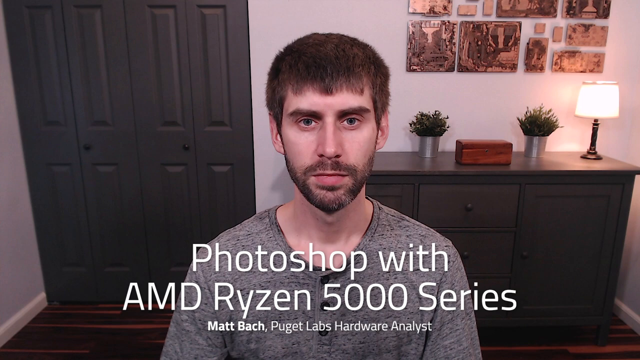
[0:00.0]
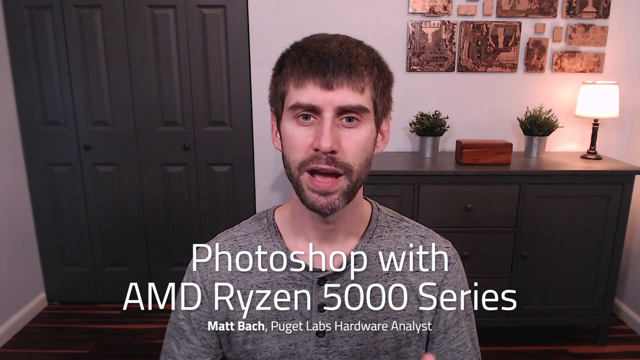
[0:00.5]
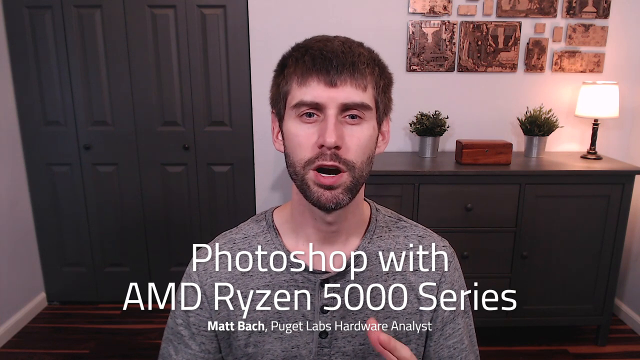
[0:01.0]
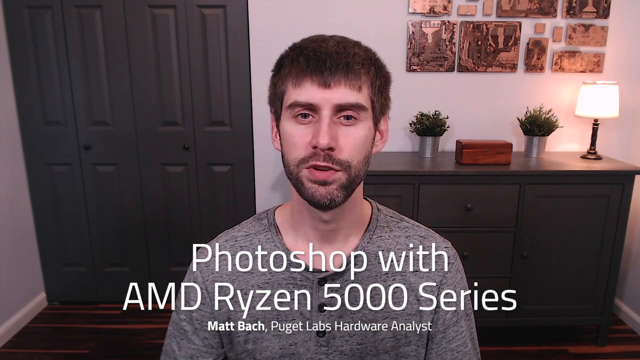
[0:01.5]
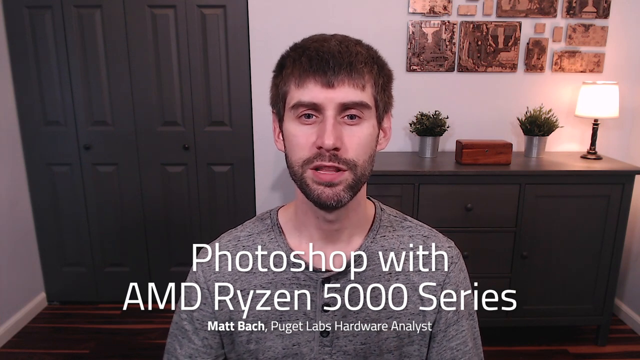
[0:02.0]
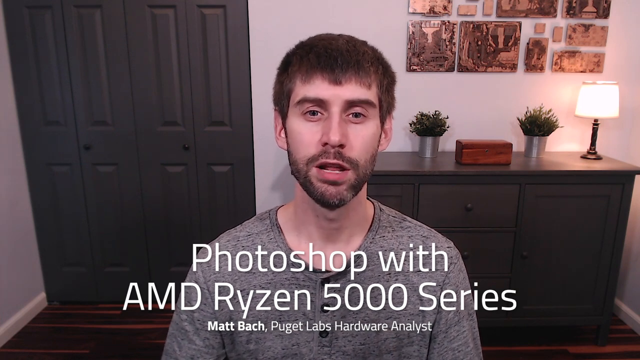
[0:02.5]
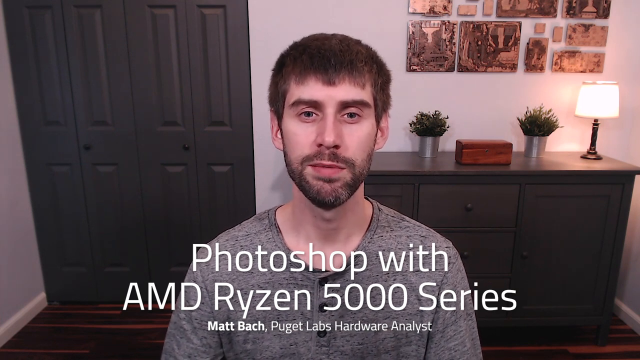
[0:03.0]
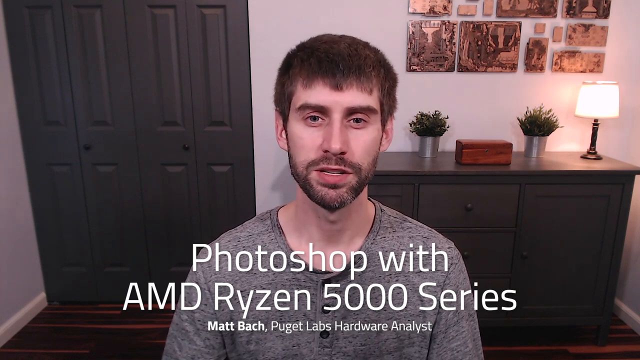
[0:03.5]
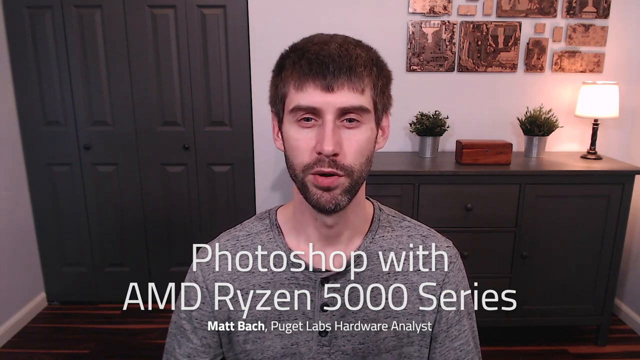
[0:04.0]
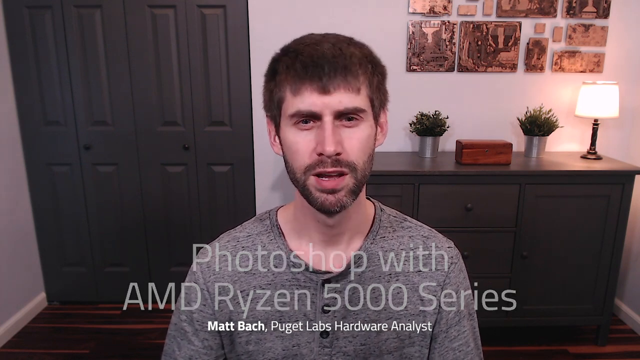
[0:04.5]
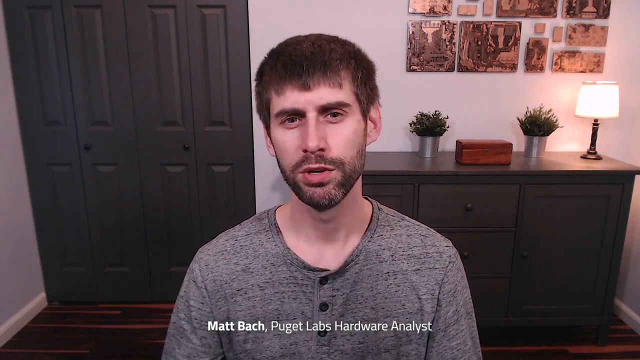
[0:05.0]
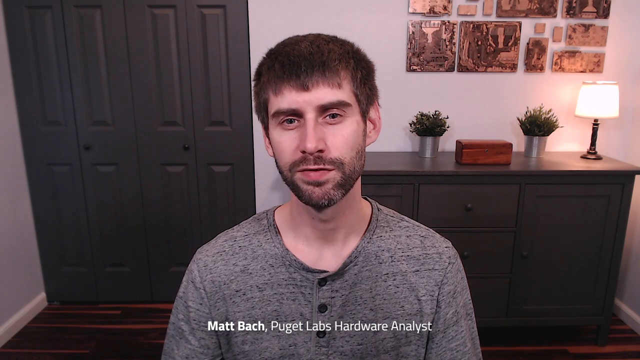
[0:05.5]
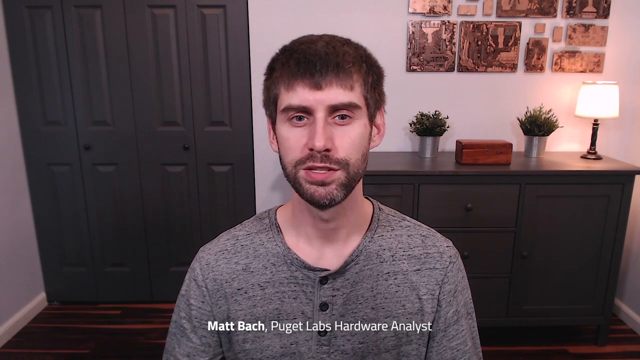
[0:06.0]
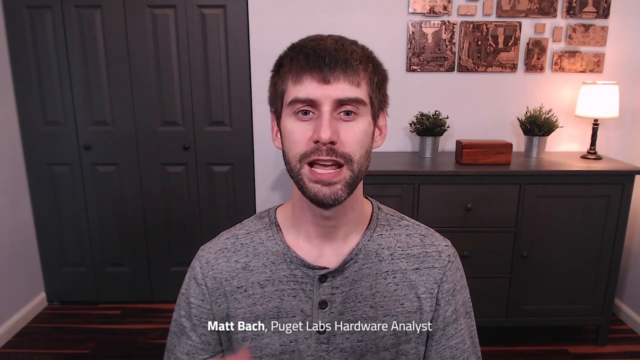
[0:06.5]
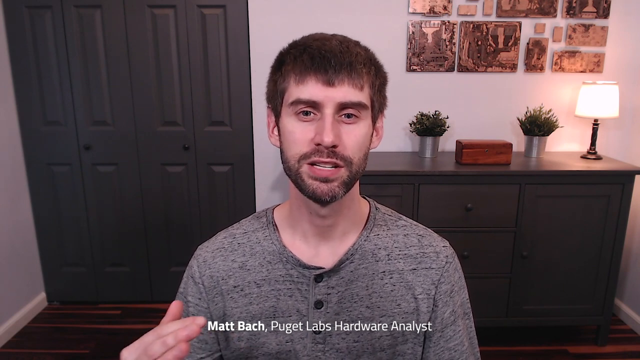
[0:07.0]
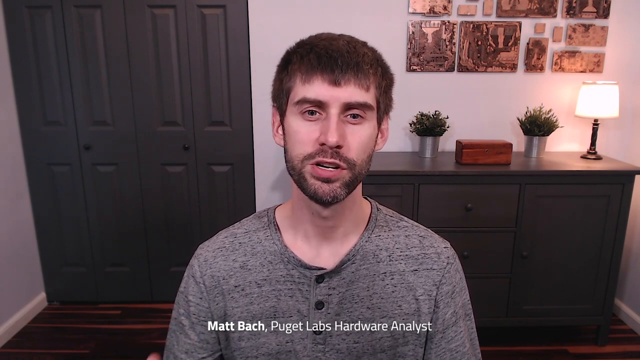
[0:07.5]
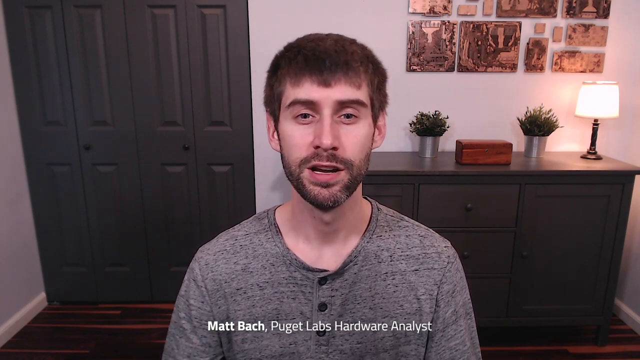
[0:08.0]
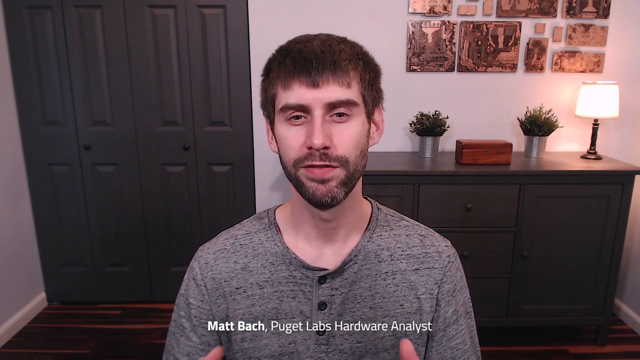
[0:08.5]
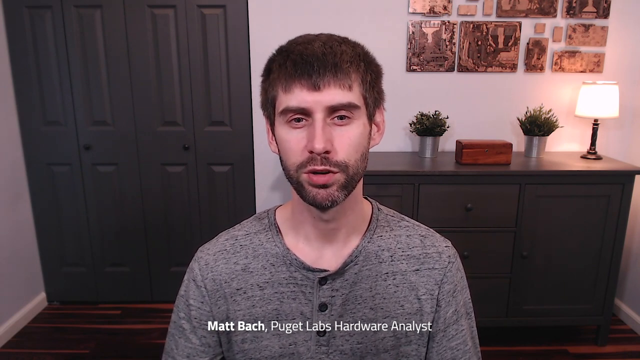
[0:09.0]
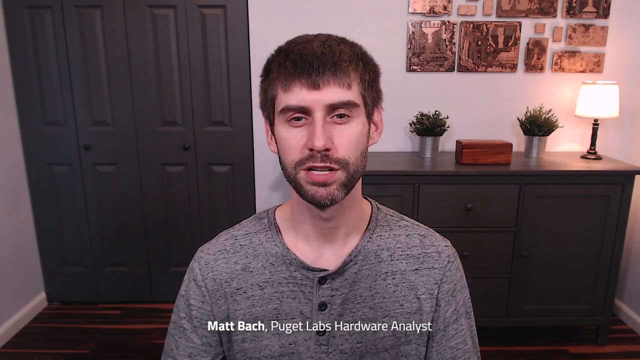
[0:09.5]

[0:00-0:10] A white adult male appears to be sitting at home. He seems very engaged in an activity related to computers or technology, possibly recording a review or tutorial about Photoshop with AMD Ryzen 5000 series processors. He is likely sitting in front of a computer in an organized home, and he seems to be in a good mood. His face is shown closely.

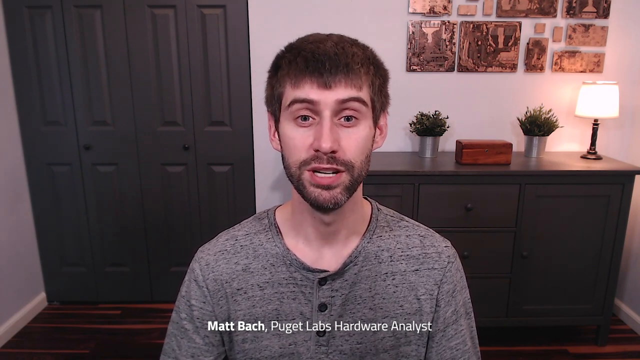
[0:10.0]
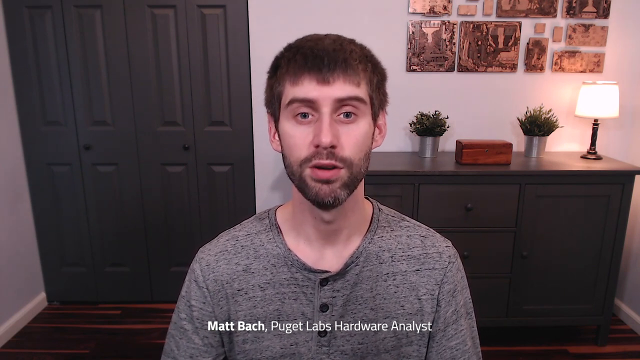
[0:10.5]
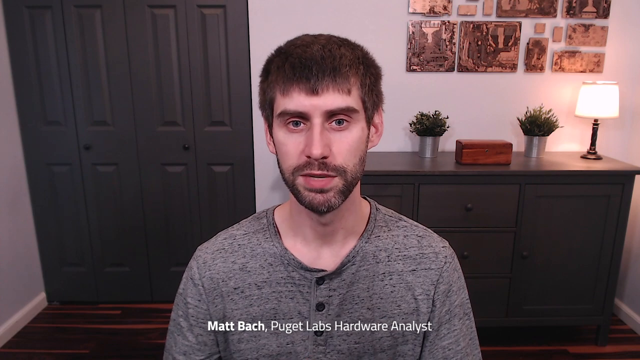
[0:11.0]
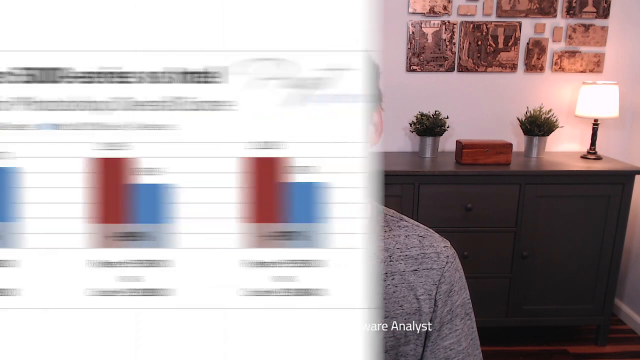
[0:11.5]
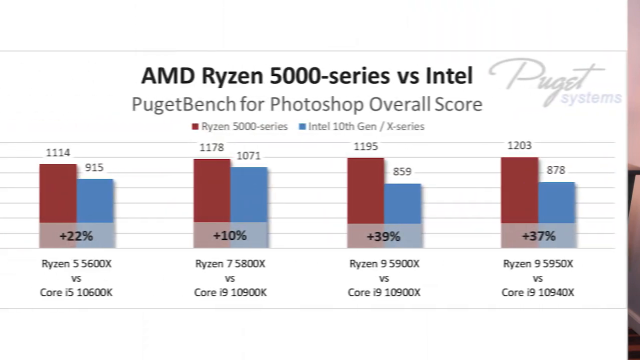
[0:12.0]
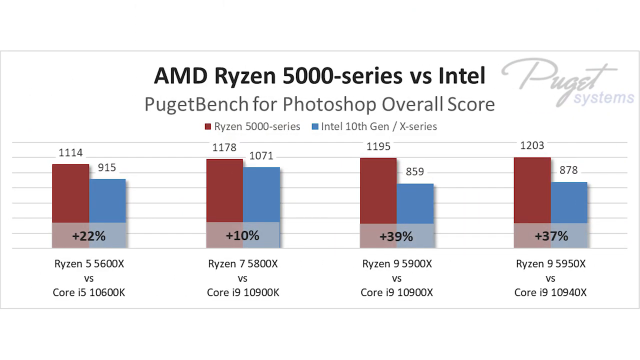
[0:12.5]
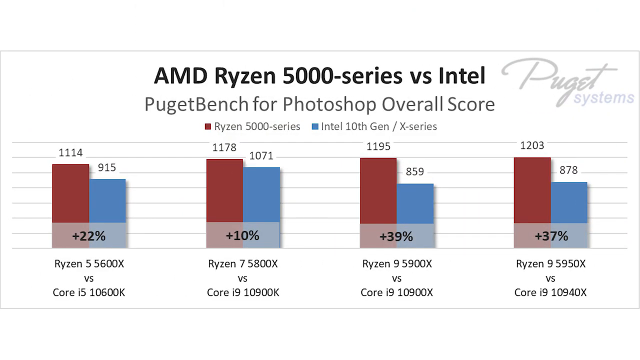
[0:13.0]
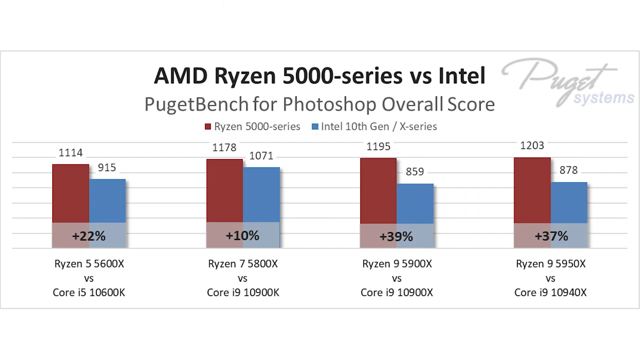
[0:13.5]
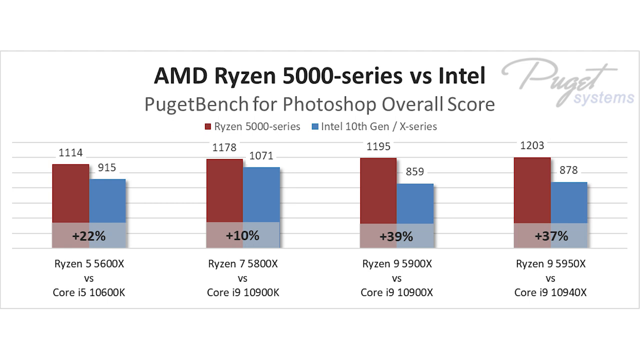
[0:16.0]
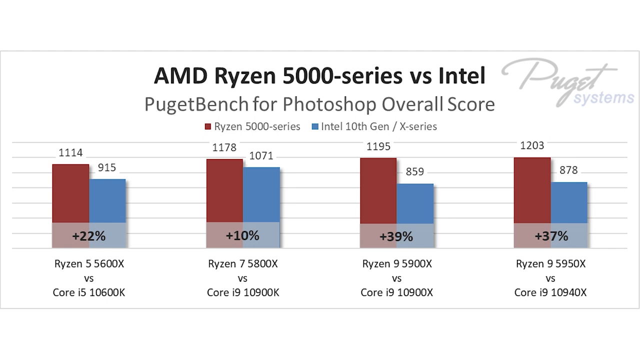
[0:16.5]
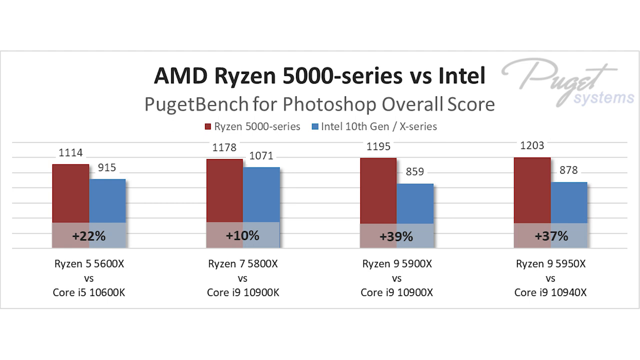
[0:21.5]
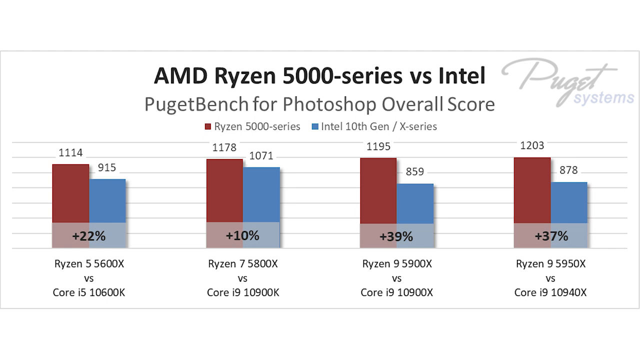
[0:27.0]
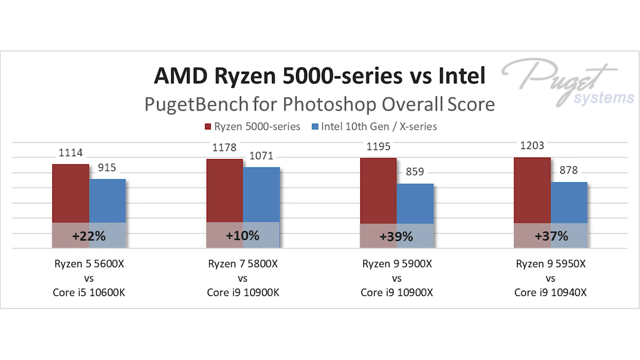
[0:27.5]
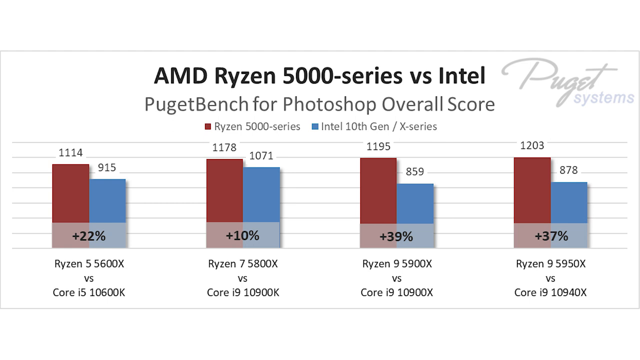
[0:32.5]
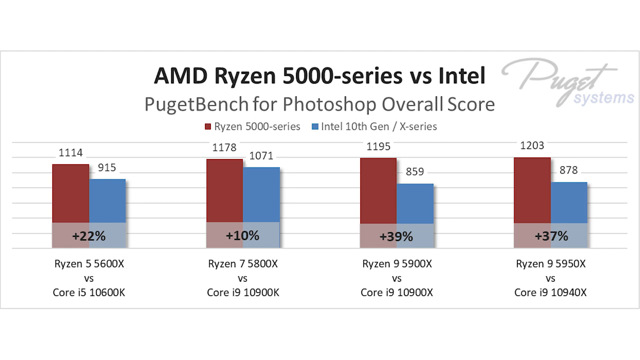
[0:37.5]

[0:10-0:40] A white adult male sits at home, likely in a home office; the setting looks cozy and very organized. He is doing what is likely a video review or tutorial about Adobe Photoshop performance on AMD Ryzen 5000 series processors. Sitting in front of the computer, he shows graphs comparing the performance of different processors, with the graph showing the difference between them. He seems excited and engaged. The computer's screen is close up to his face.